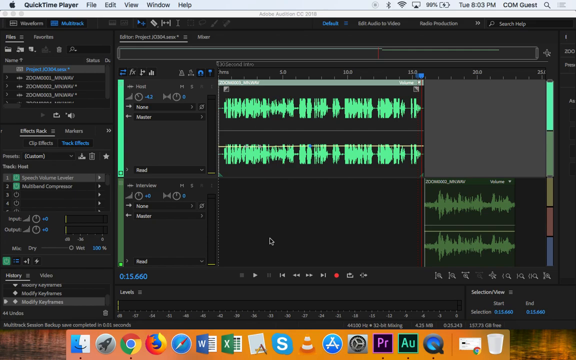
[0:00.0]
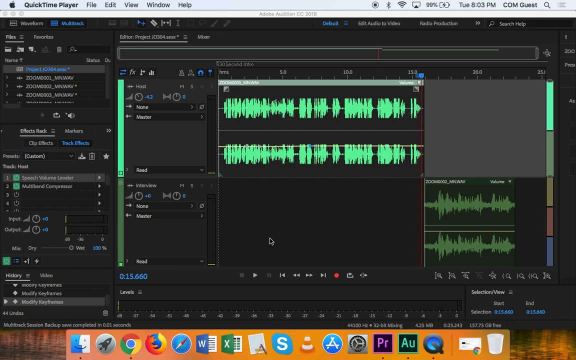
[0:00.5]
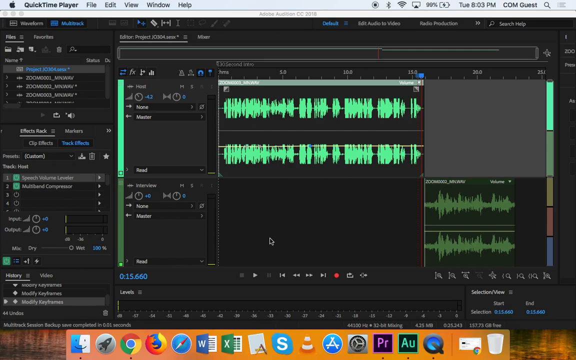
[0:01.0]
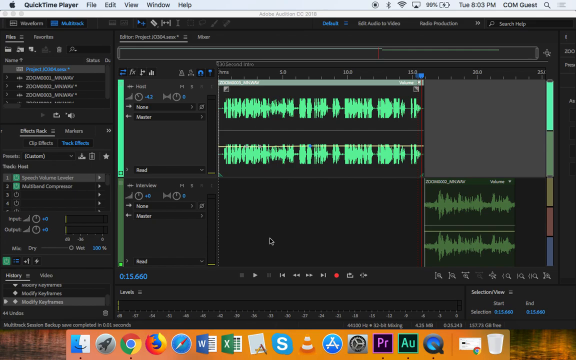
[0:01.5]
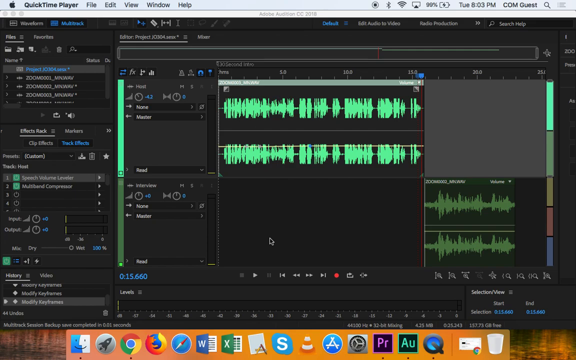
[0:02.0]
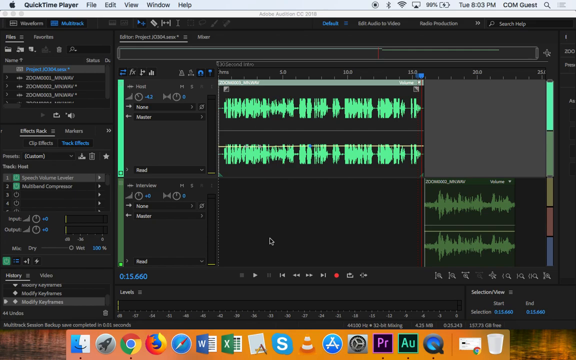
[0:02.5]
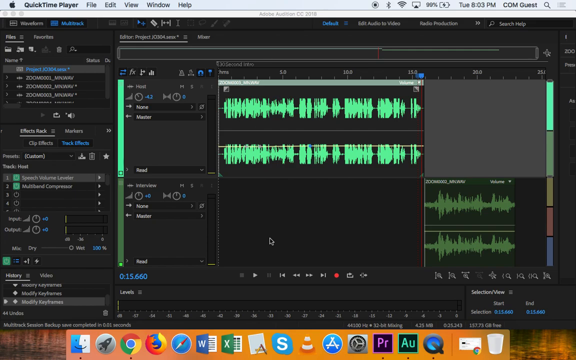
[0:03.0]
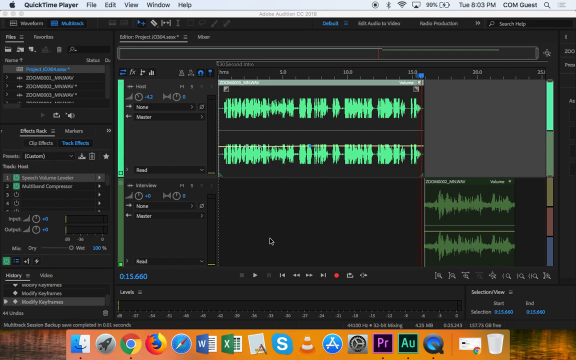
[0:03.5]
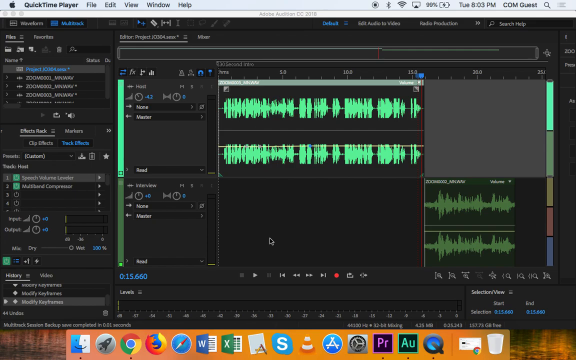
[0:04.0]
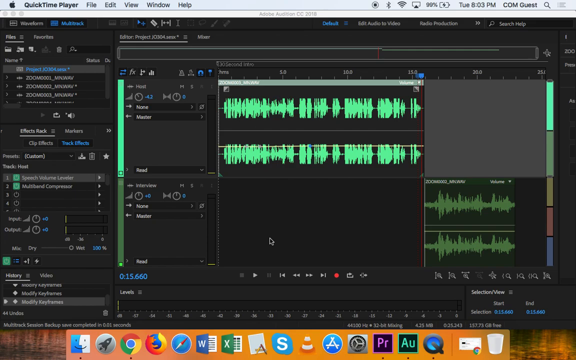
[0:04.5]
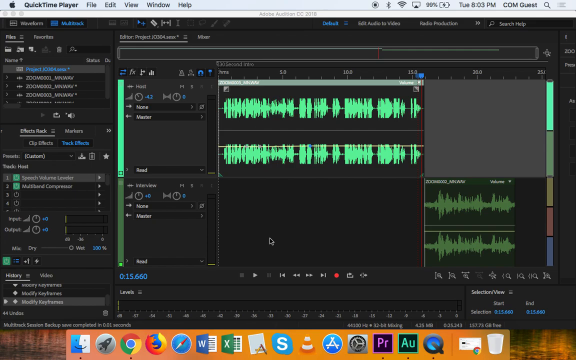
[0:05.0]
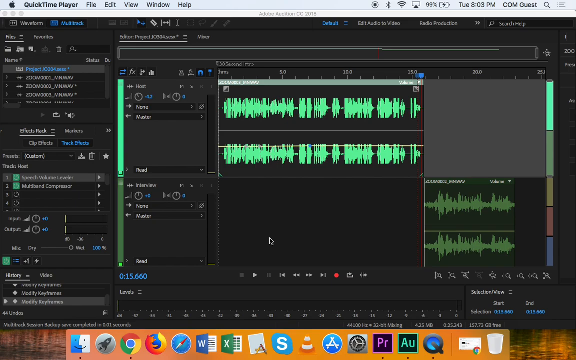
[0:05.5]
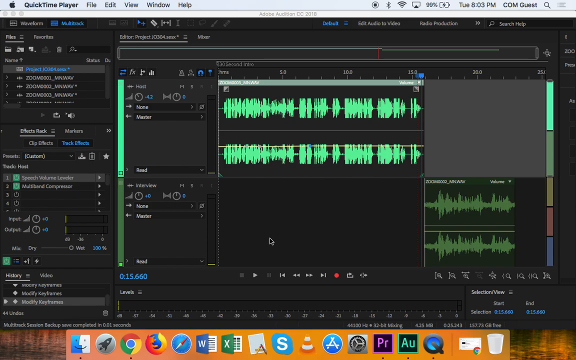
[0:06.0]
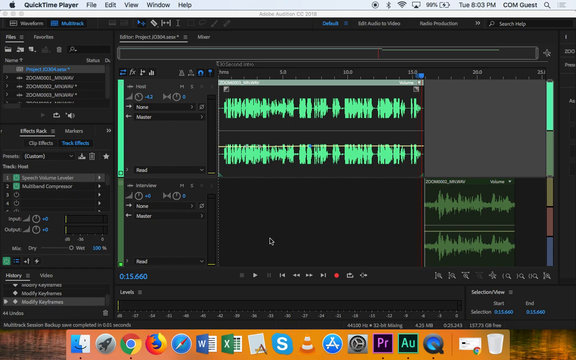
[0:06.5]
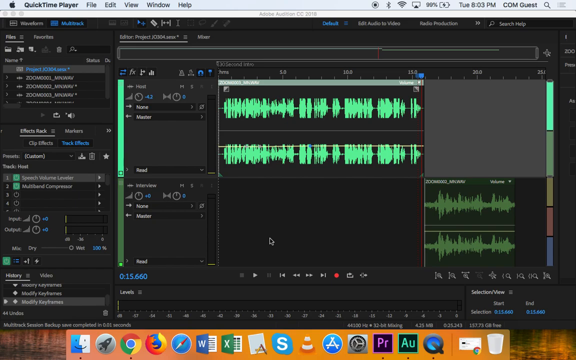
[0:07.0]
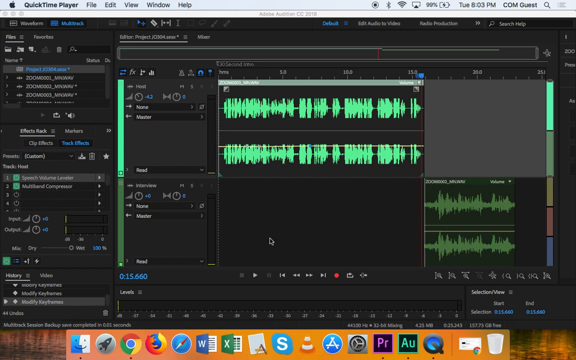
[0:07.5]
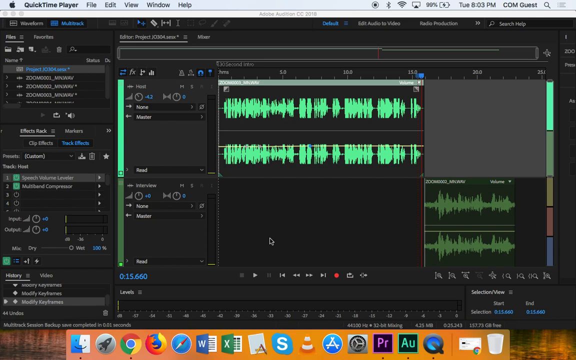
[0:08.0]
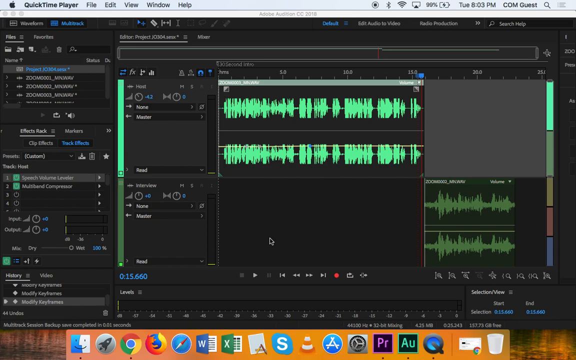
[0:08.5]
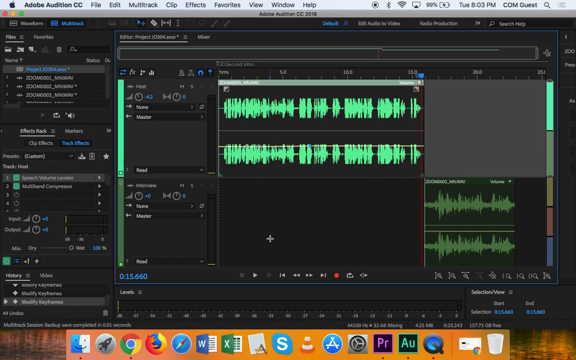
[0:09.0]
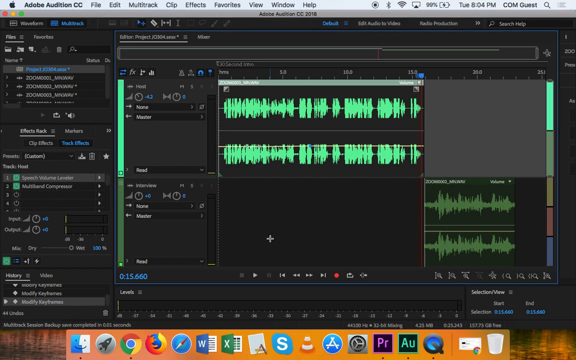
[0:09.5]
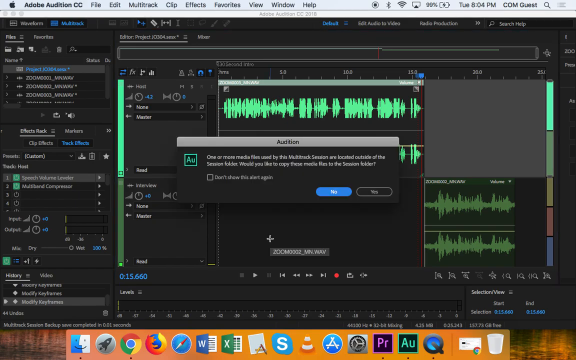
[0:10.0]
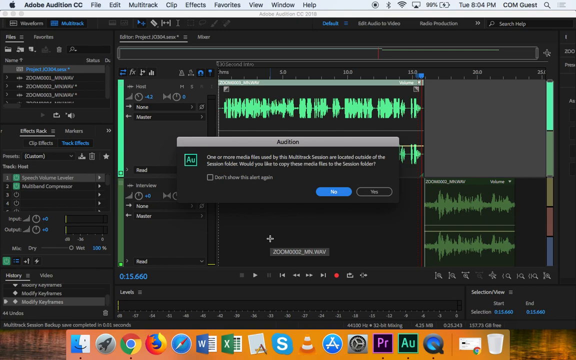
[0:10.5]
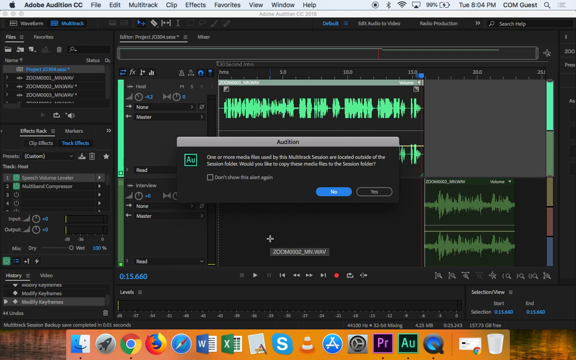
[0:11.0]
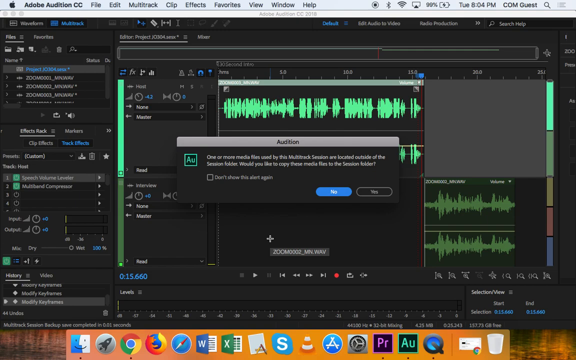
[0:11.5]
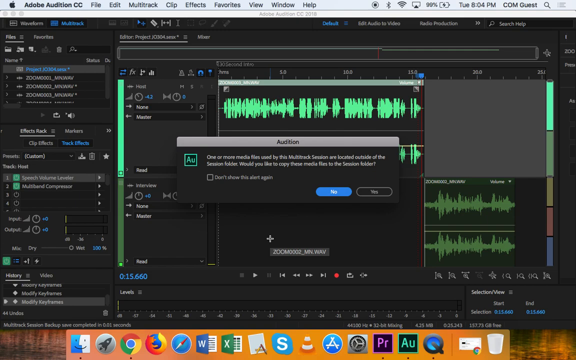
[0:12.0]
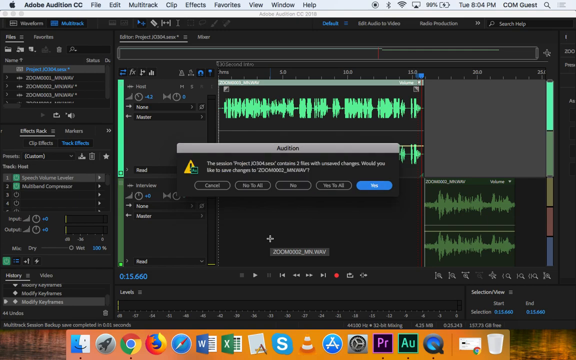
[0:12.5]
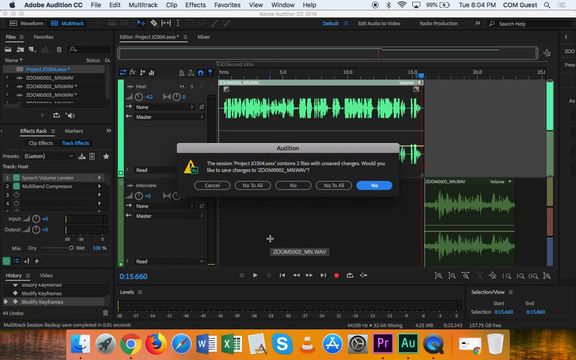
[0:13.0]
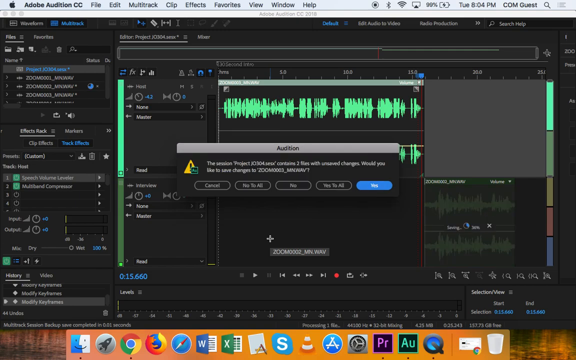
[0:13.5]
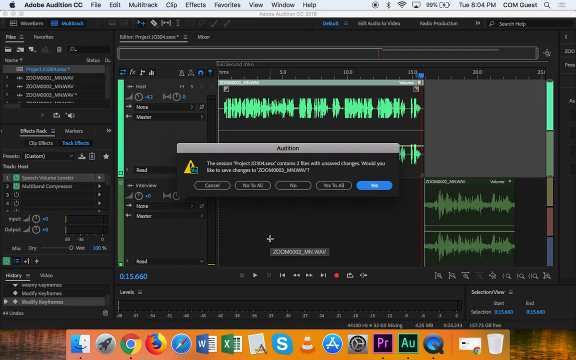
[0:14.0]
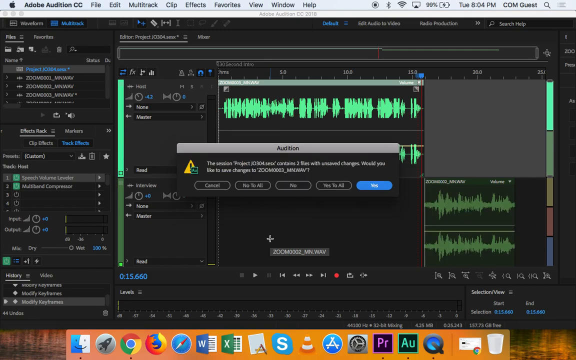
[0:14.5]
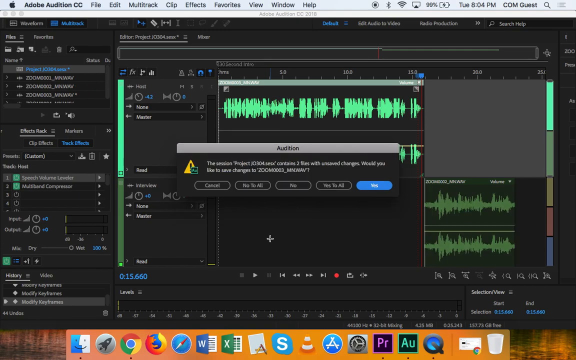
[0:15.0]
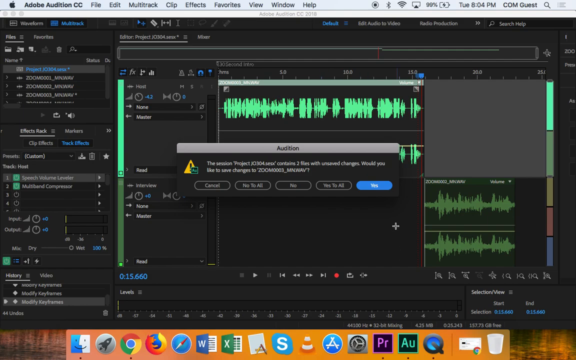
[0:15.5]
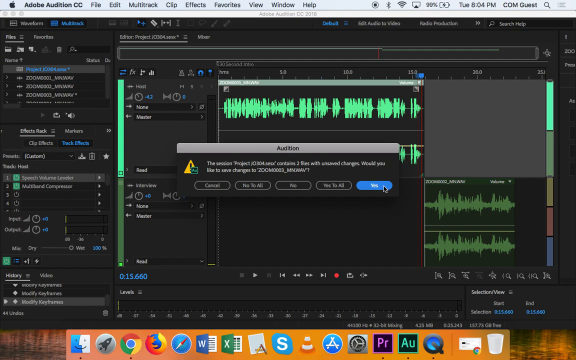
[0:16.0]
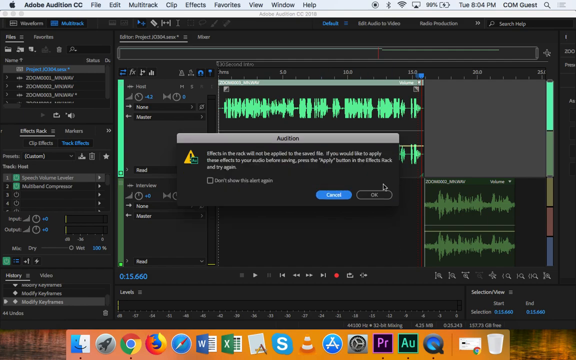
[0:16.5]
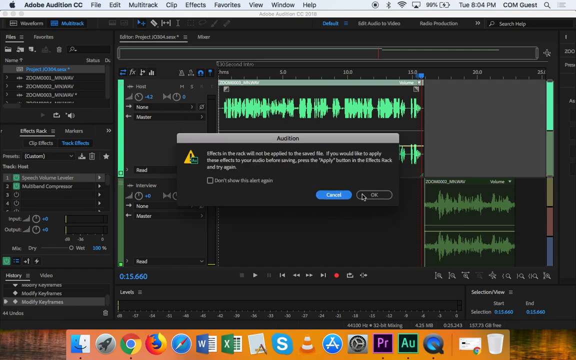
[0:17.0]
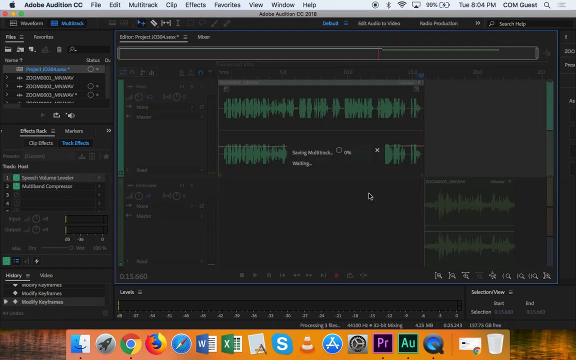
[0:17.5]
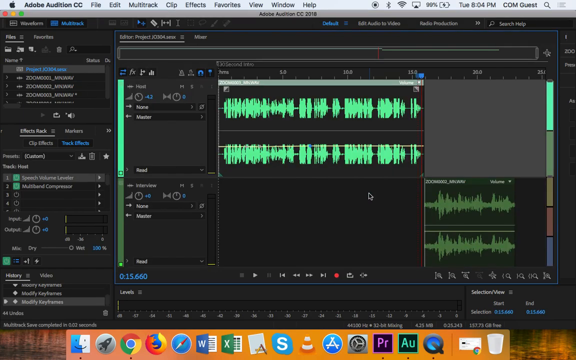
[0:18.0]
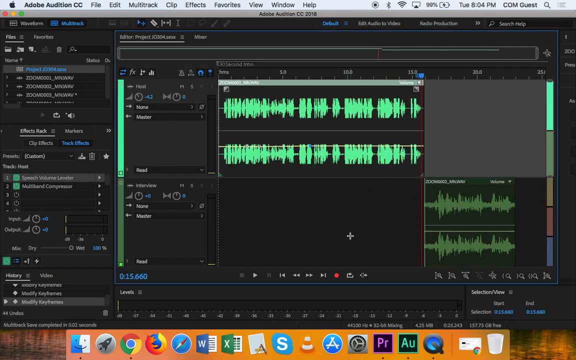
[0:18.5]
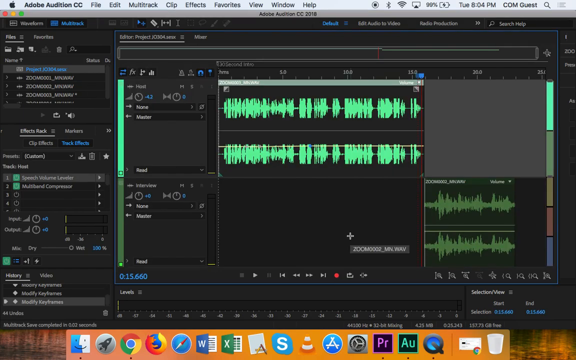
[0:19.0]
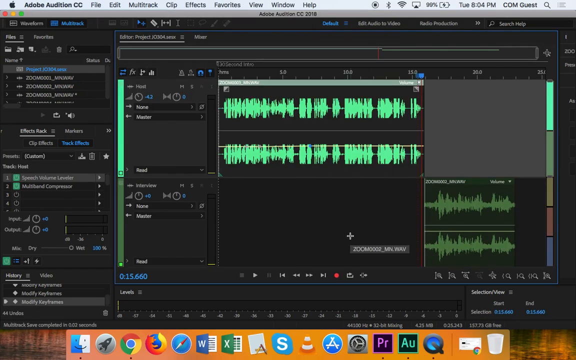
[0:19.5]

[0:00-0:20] Someone is recording their screen. They are using QuickTime Player to record various audio or edit sounds or music, and the screen stays still while they record the program. The Mac interface is visible along the very top, with the file, edit, view, window and help options. The program they are using is largely gray with white font, and any selected text turns blue. On the left are various lists of program files and sound files, and on the right is the actual studio interface. They click on the studio interface and a new window opens, reading "audition" at the top, with the message "one or more media files used by this multi-track session are located outside of the session folder. Would you like to copy these media files to the session folder?" and the options "No" and "Yes". The person quickly hits a key, selecting no. Another window pops up reading "audition" with the message "This session project contains two files with unsaved changes. Would you like to save changes to" followed by the file's name. Below are multiple buttons reading "cancel", "no to all", "no", "yes to all" and "yes", with "yes" highlighted in blue. The user clicks yes and a new window appears, reading "effects in the rack will not be applied to the saved file. If you would like to apply these effects to your audio before saving, please press the apply button in the effects rack and try again." This pop-up has two buttons reading "cancel" and "okay", and they click okay.